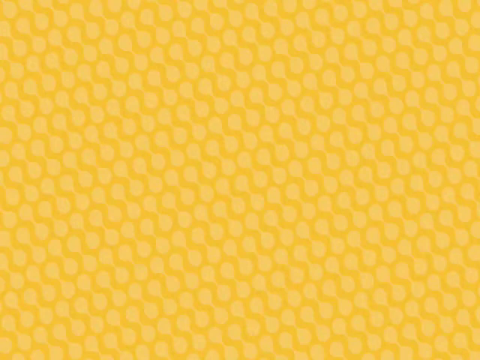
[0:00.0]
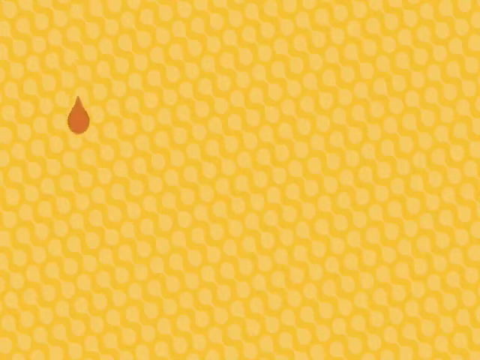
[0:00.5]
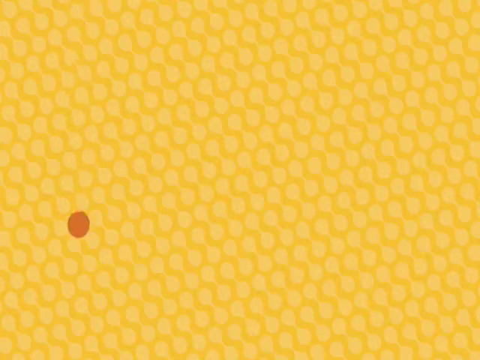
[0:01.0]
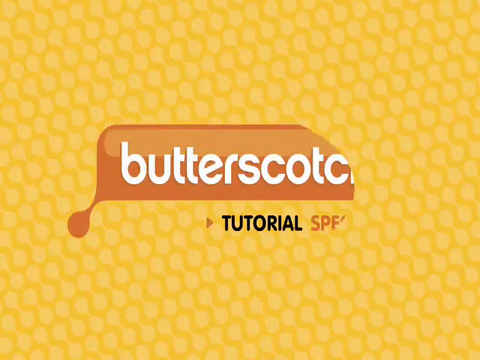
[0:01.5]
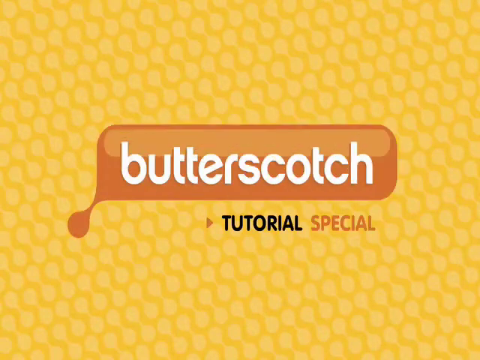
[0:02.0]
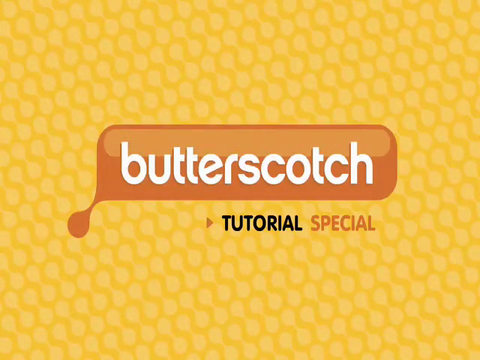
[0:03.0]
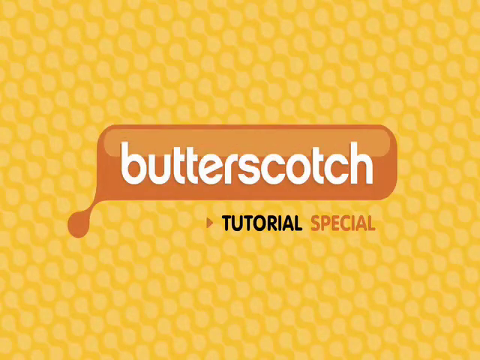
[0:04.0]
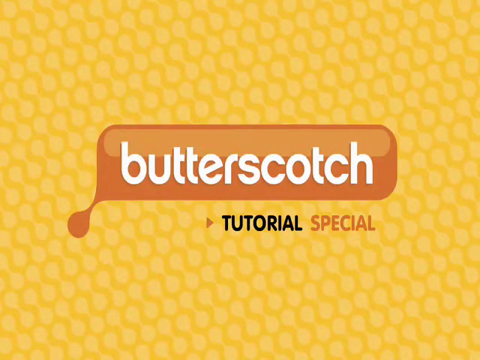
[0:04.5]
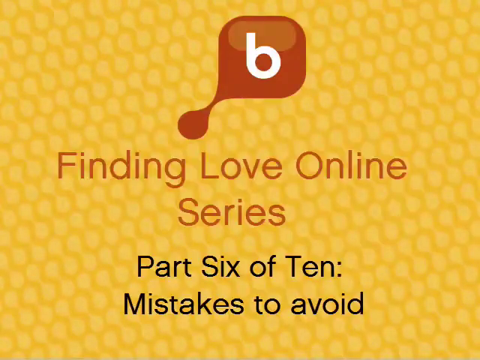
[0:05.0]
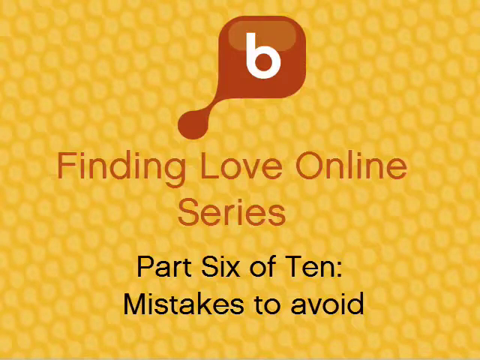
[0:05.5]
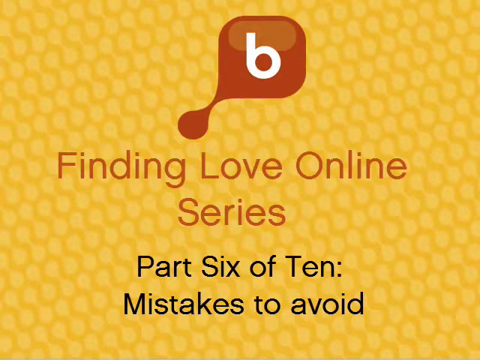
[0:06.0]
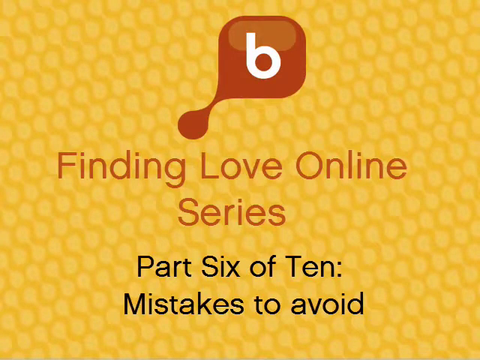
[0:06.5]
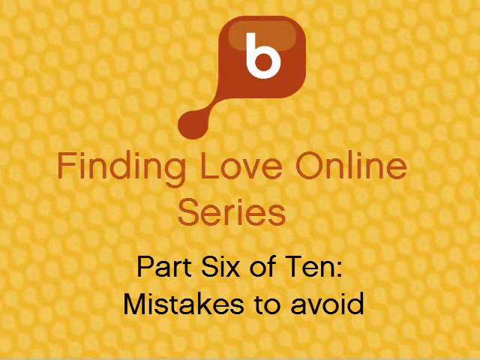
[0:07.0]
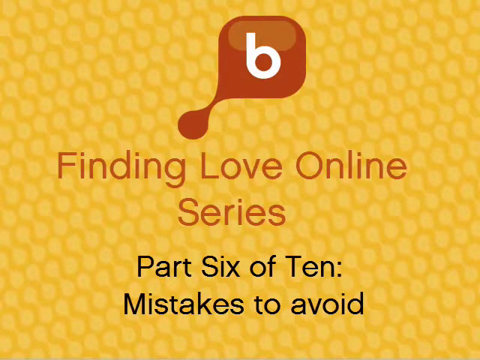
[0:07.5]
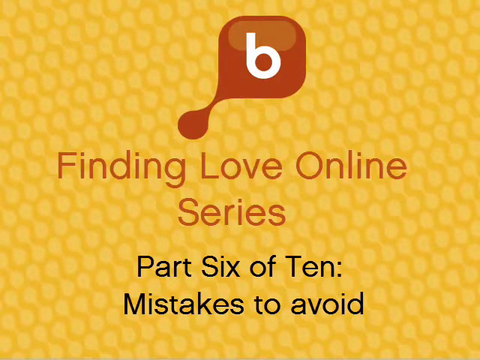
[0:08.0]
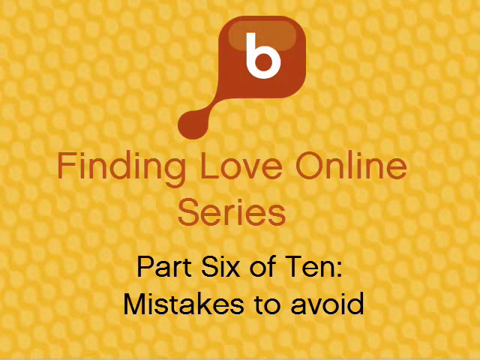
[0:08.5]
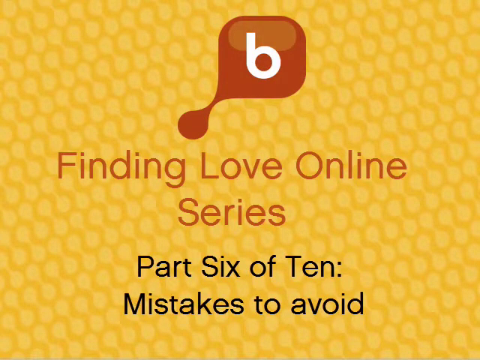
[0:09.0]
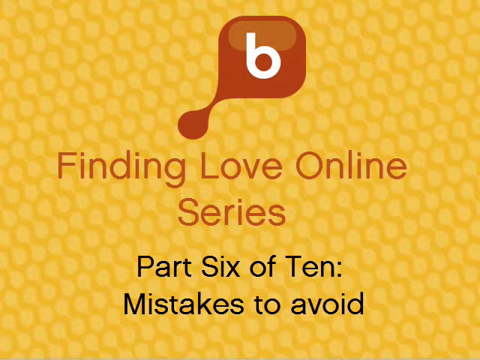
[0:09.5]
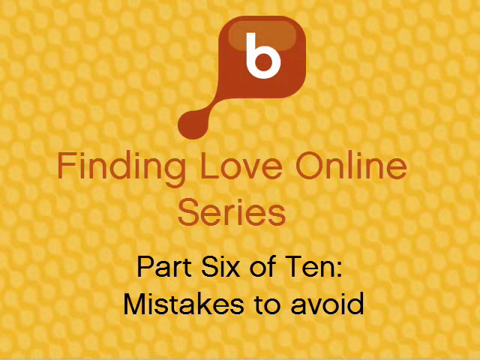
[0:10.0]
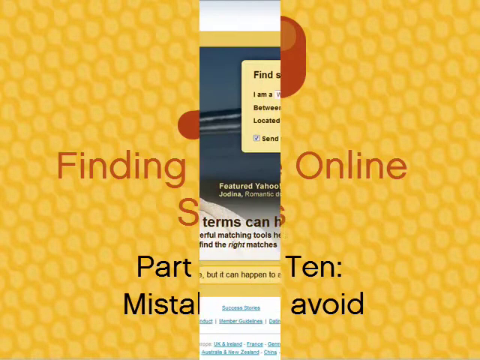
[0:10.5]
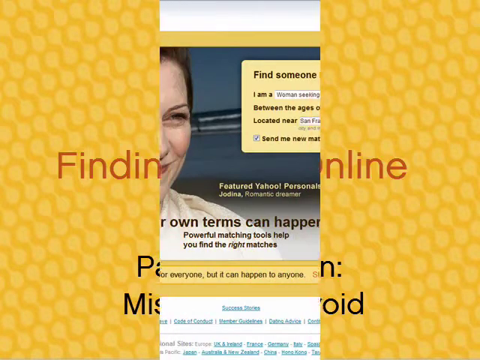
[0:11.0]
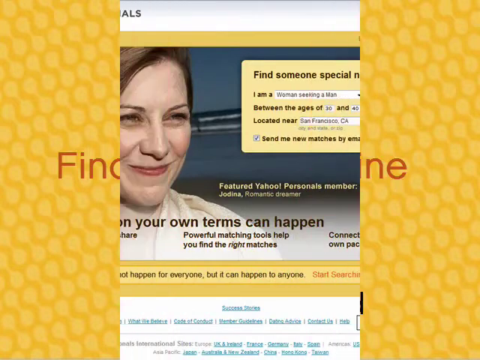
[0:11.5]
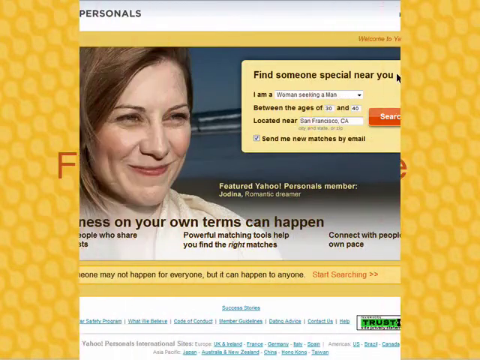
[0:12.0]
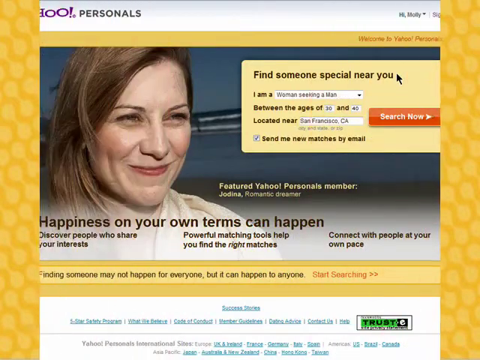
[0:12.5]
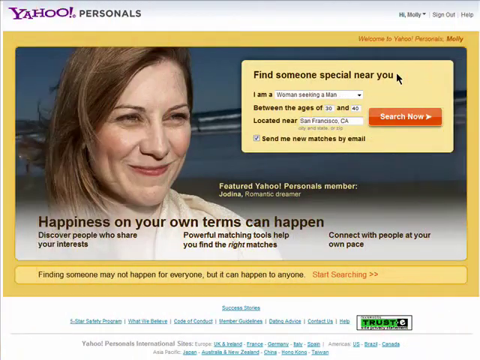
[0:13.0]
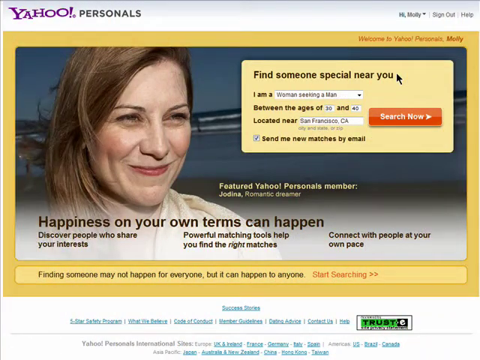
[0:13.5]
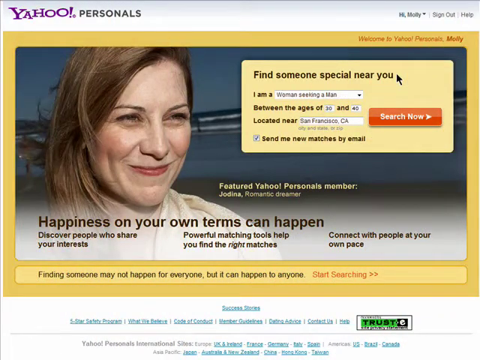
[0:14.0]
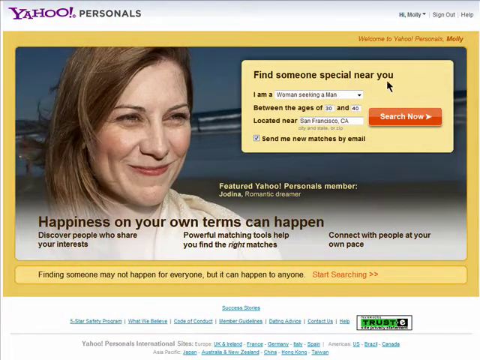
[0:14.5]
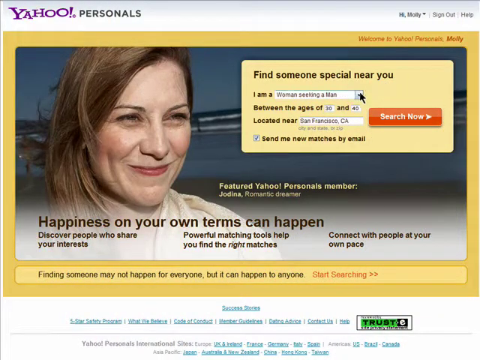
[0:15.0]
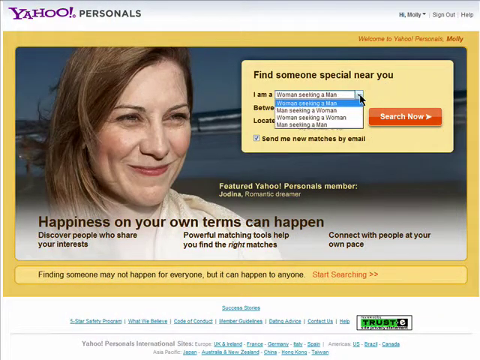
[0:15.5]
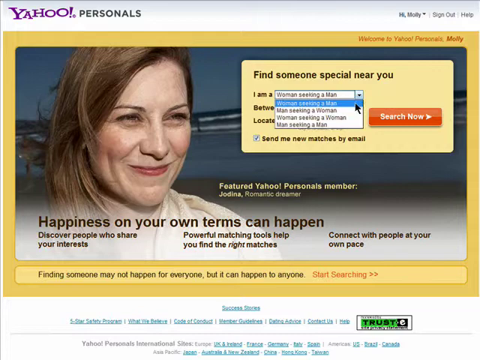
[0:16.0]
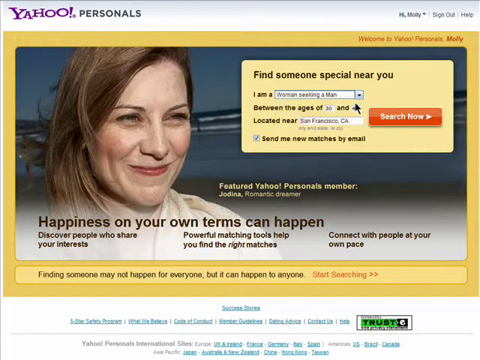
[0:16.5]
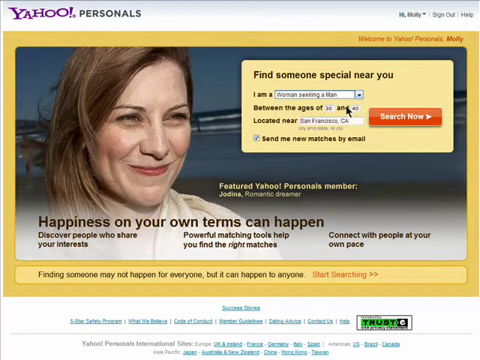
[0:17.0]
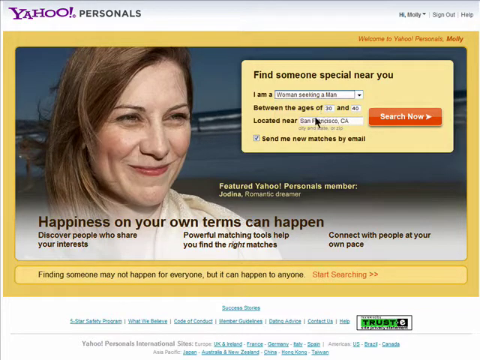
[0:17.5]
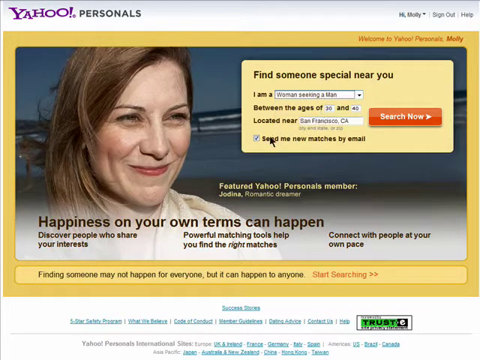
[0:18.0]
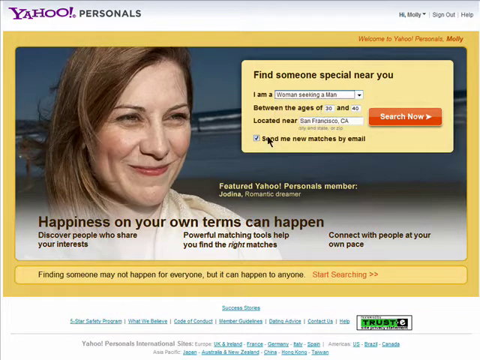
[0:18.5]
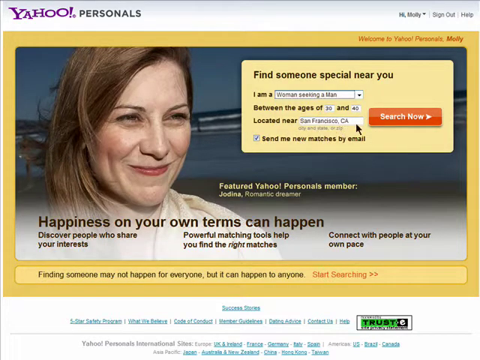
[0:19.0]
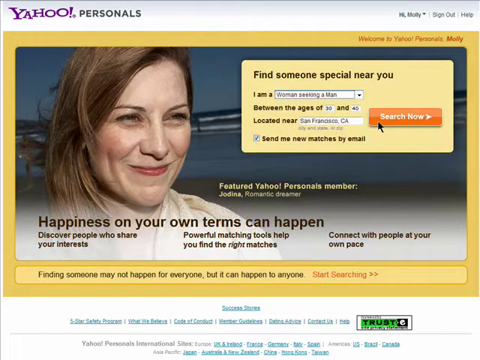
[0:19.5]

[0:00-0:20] The video opens on a yellow background with an hourglass-like pattern. An orange drops down on the left-hand side and expands into a rectangle with white writing reading "BUTTERSCOTCH". The next screen shows a Butterscotch logo at the top, and underneath it reads "Finding Love Online Series, Part 6 of 10, Mistakes to Avoid". This screen splits down the middle and slides off to either side, revealing a screenshot of Yahoo Personals. Below the title bar is an image: on the left is the face of a smiling woman with an outdoor sky behind her, and text underneath, still on the image, reads "happiness on your own terms can happen". A footer is visible below the image. On the right-hand side of the image is a yellow pop-up box titled "Find Someone Special Near You", with lines of drop-down boxes below it. The first line is "I am", with a box initially reading "Woman Seeking Man"; the next reads "Between the Ages of", with text boxes for age; the bottom line reads "located near", with a drop-down menu for cities. A search button is to the right-hand side. A cursor over the box moves from the right-hand corner to the first drop-down box, showing other options such as a man seeking a man, then moves down to a checkbox at the bottom of the pop-up box reading "send me email and news".